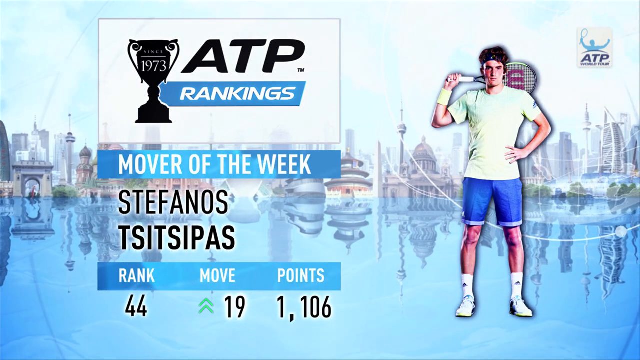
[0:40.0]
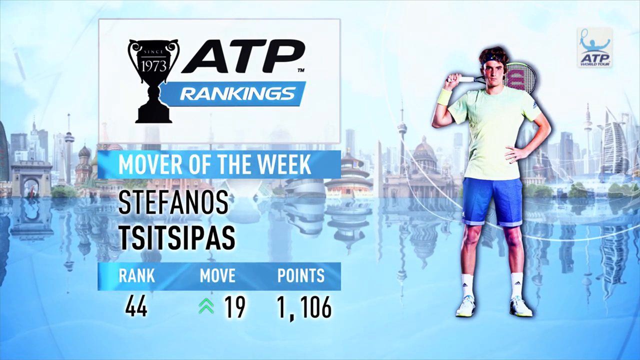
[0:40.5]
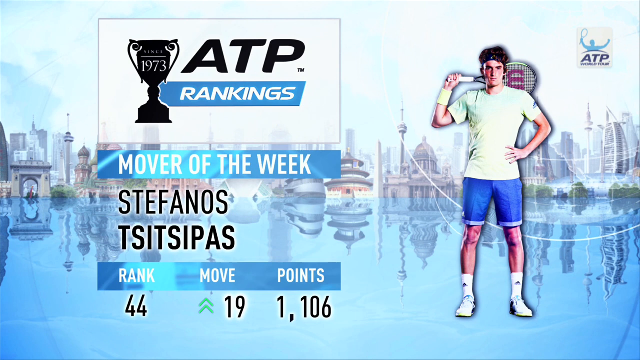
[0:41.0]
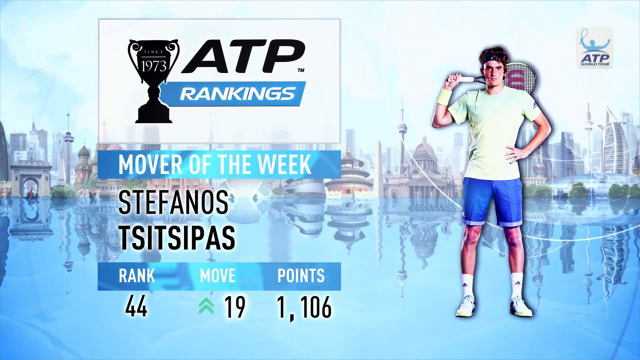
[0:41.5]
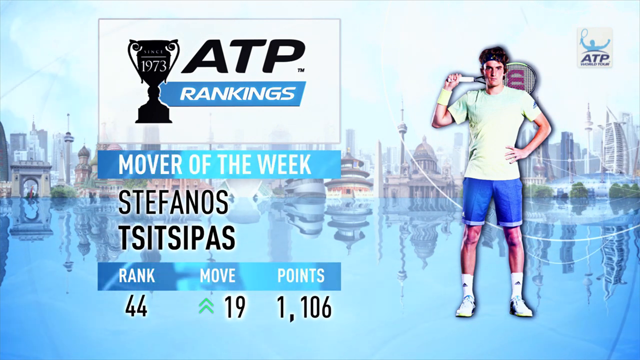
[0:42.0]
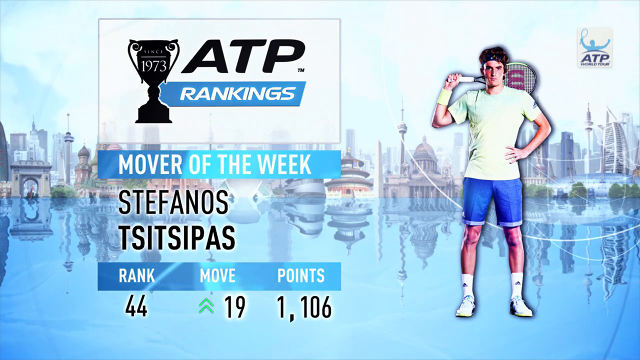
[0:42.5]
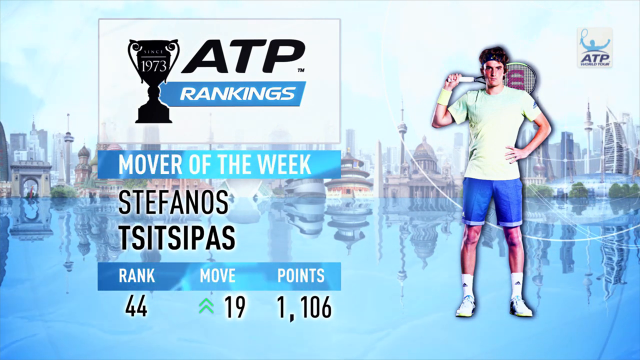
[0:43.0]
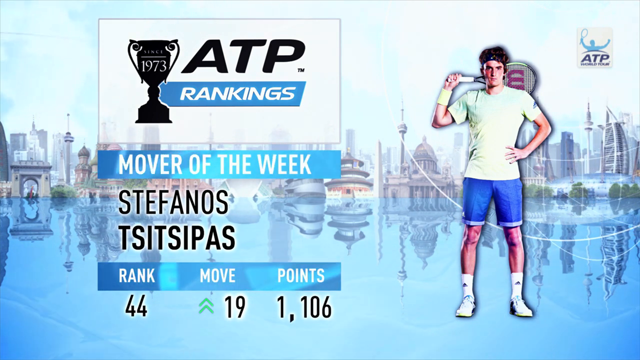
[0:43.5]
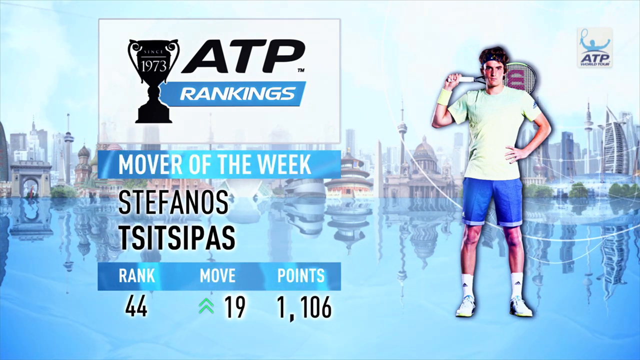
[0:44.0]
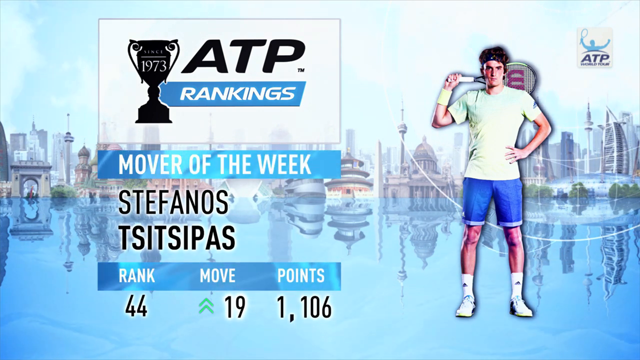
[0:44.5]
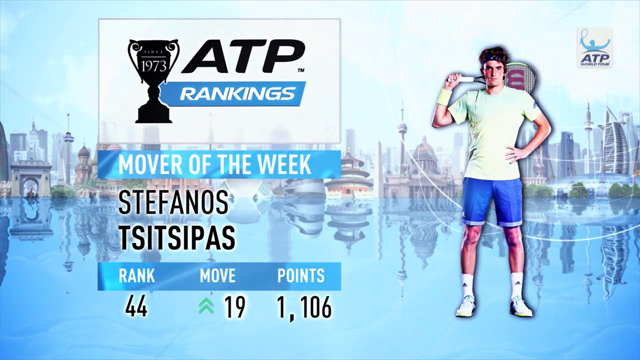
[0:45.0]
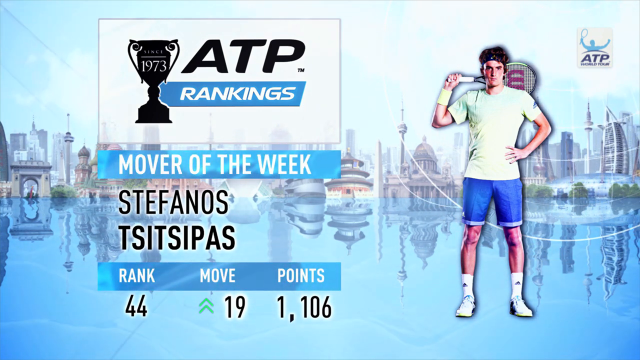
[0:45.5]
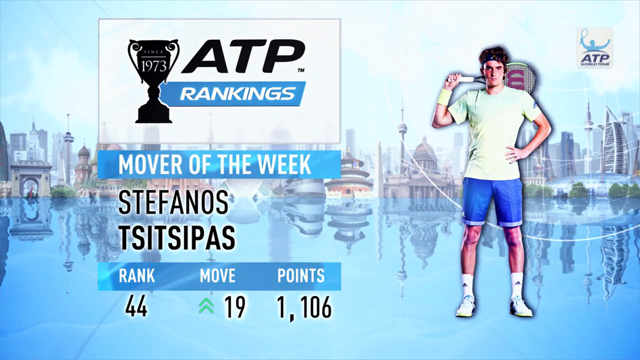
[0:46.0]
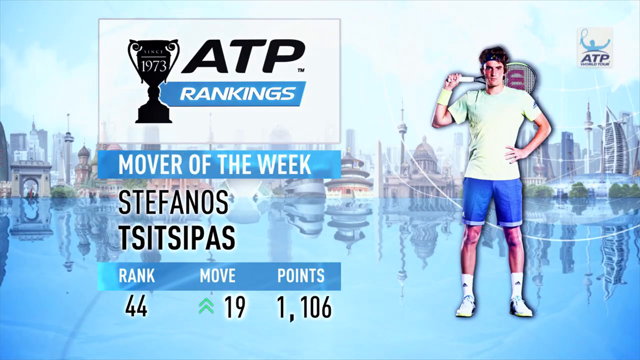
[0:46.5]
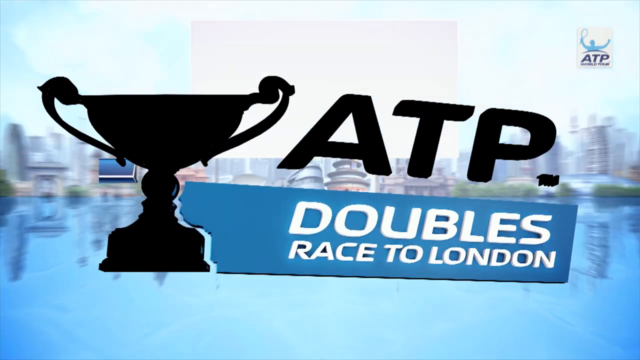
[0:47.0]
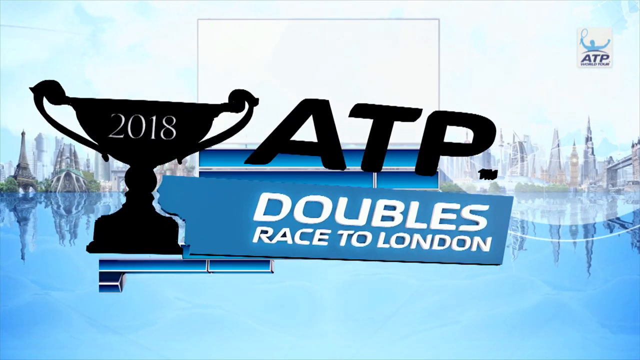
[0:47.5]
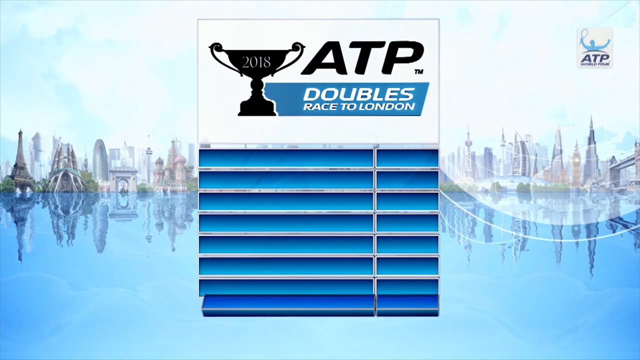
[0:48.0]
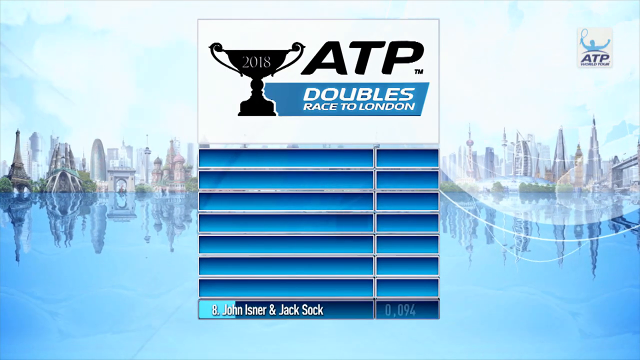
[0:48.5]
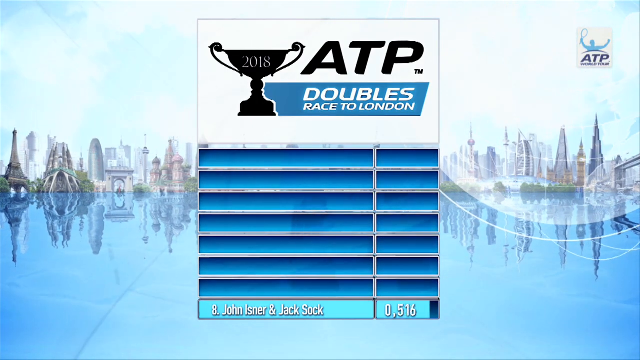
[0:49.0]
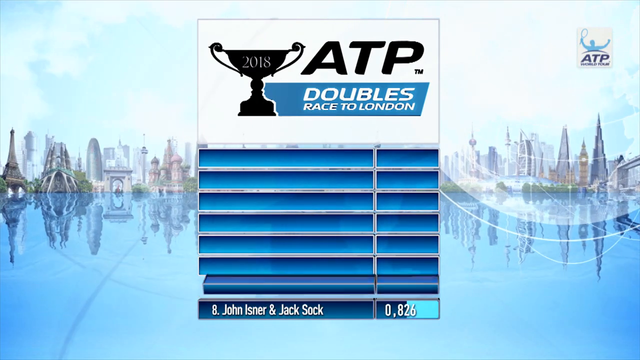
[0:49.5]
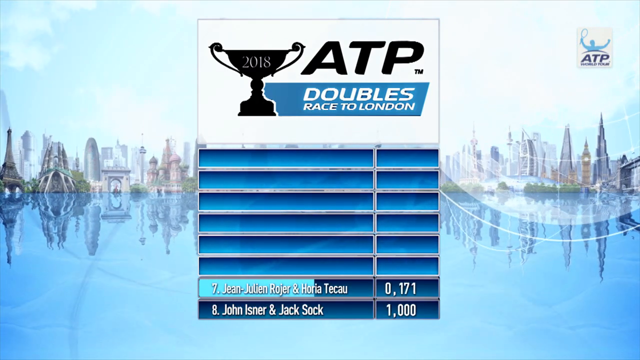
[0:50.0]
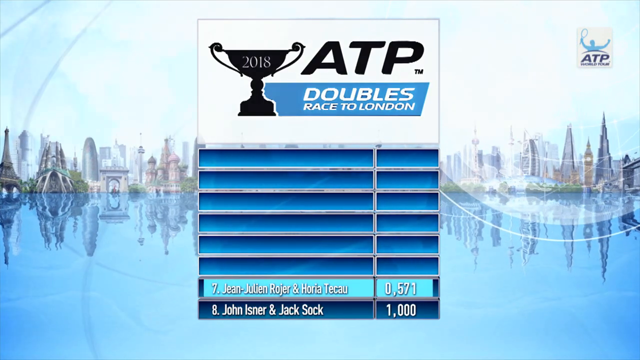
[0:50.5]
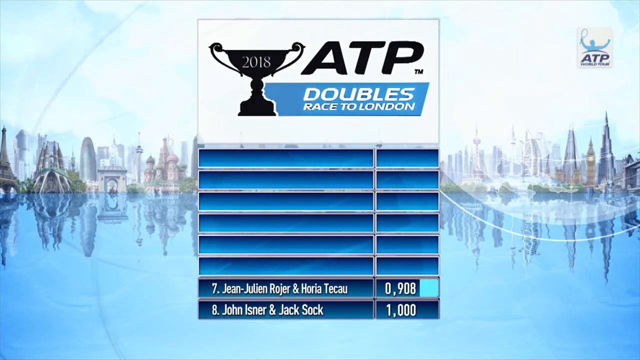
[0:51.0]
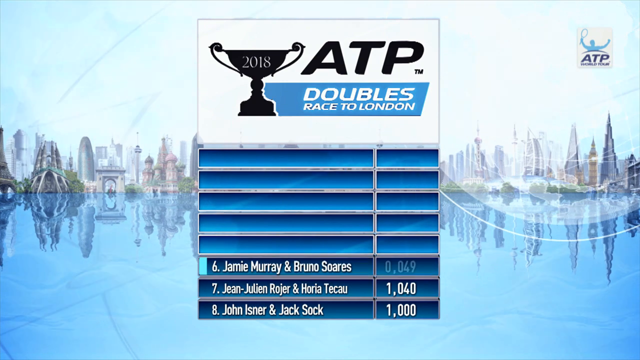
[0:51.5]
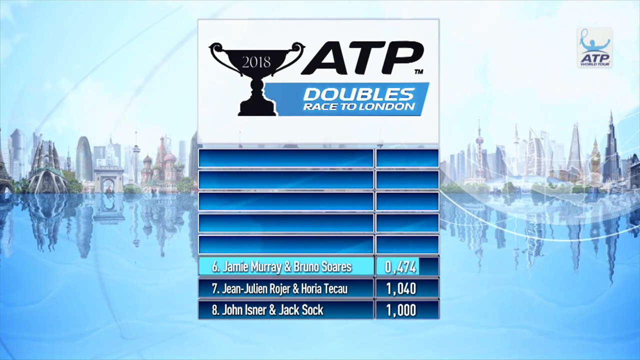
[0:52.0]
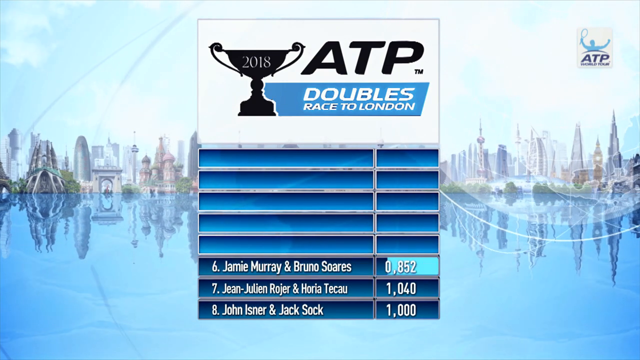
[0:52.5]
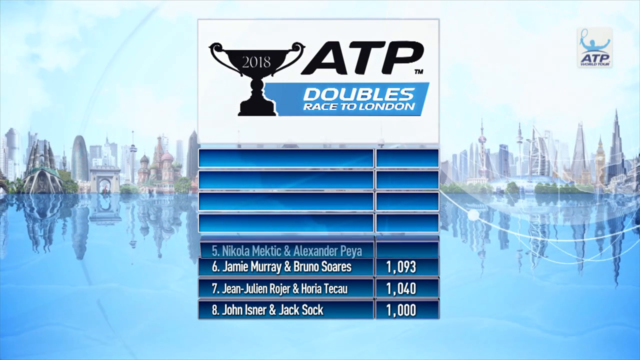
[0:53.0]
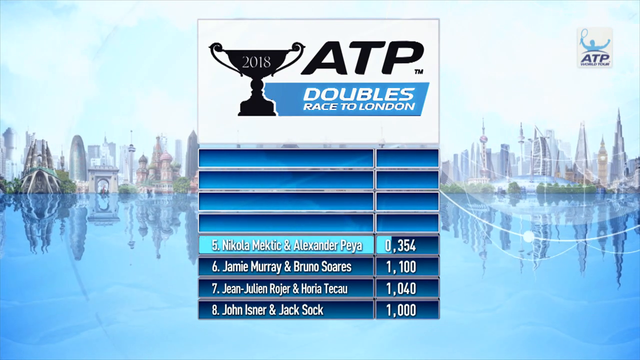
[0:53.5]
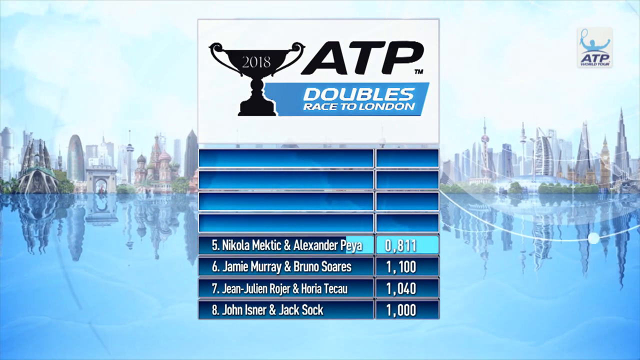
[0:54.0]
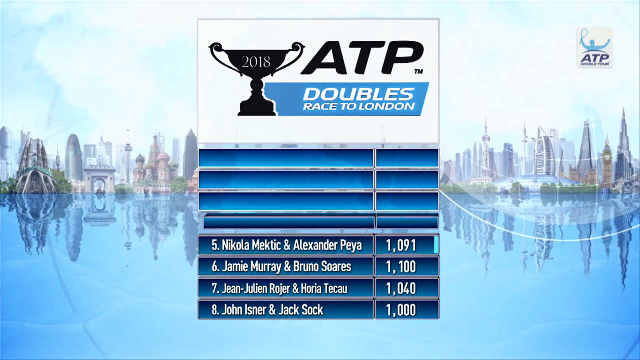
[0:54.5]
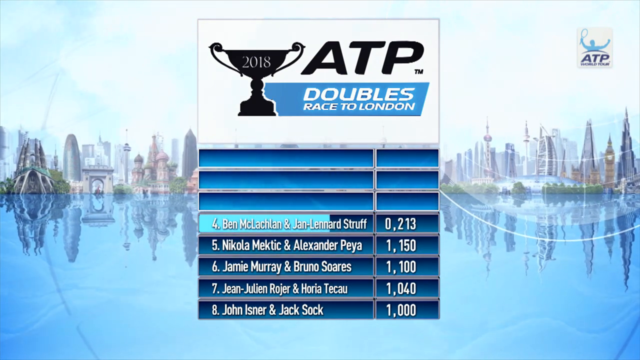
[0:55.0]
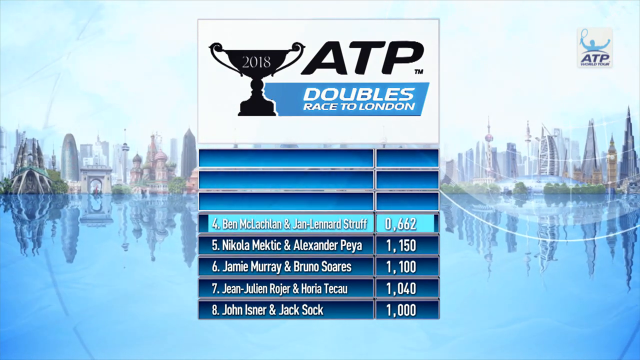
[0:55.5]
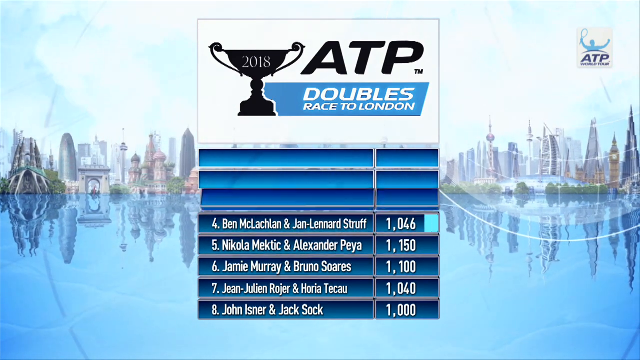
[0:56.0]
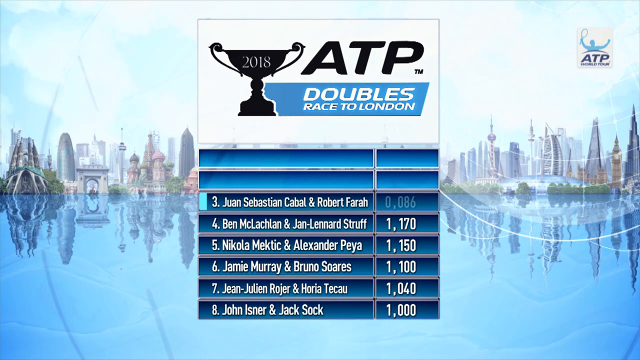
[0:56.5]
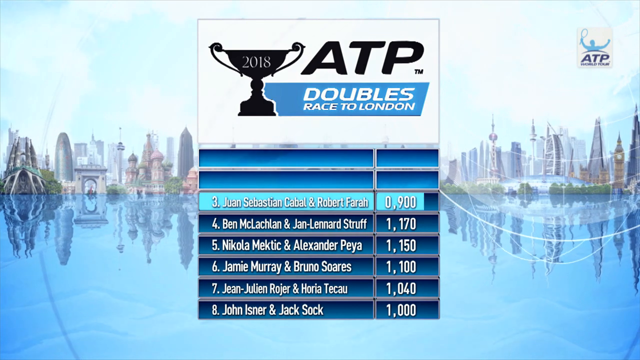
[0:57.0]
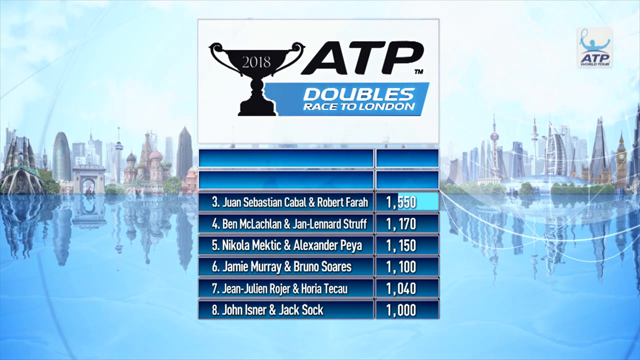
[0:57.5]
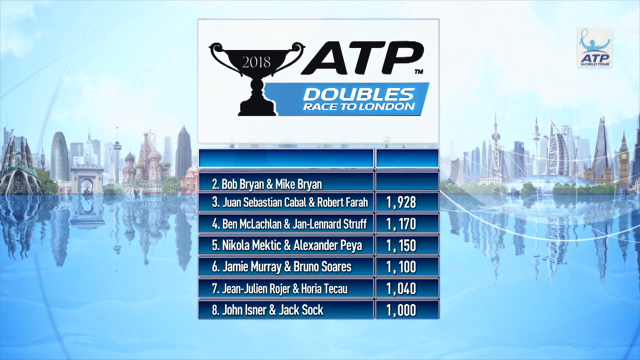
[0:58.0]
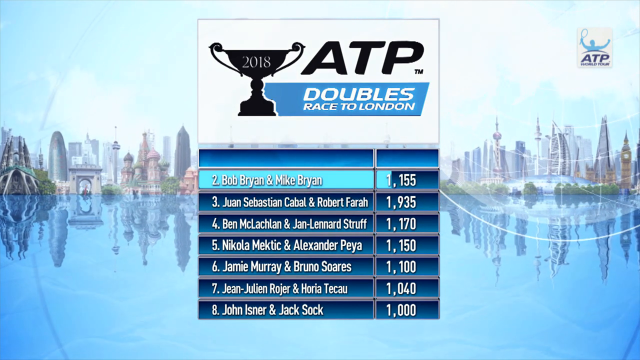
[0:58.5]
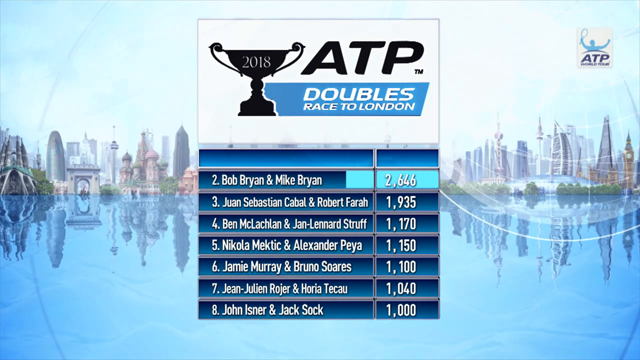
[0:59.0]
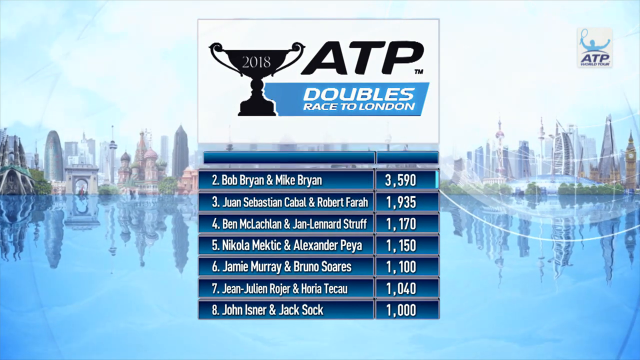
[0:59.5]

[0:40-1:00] The shot of Stephanos Tsitsipas and his stats remains for some time before a transition to a close-up of the large black prize cup, now with "2018" written on it in white. It rotates away and zooms out to the background, where it is joined by black text to the right reading "ATPTM" and, underneath, a blue box with white writing reading "Doubles race to London". This group of image and text moves to the top centre of the screen, and beneath it another grid of blue cells is constructed. The bottom blue cell turns and white text appears inside it reading "8 John Isner and Jack Sock", while in the cell to the right white numbers increase to reach 1000. In the cell above, "7 Jean-Julien Roger and Horia Tekau" appears, with numbers increasing until they stop at 1040. Next up is "6 Jamie Murray and Bruno Soares", reaching 1100; then "5 Nikola Mektic and Alexander Peya", reaching 1150; then "4 Ben McLachlan and Jean-Lennard Struff", reaching 1170; then "3 Juan Sebastian Cabal and Robert Farah", reaching 1935; and above these "2 Bob Bryan and Mike Bryan", reaching 3755. All of this is presented against the illustration of the large expanse of blue water, with the montage of world landmarks on the distant horizon under a blue sky.